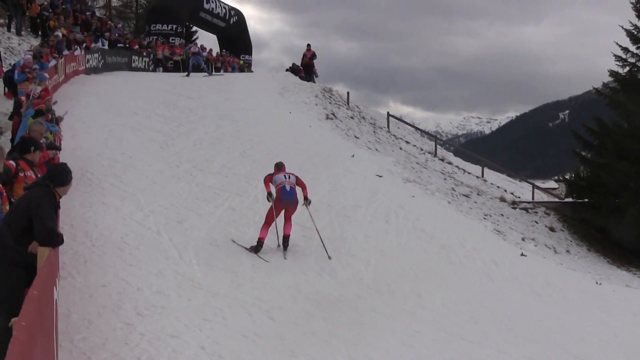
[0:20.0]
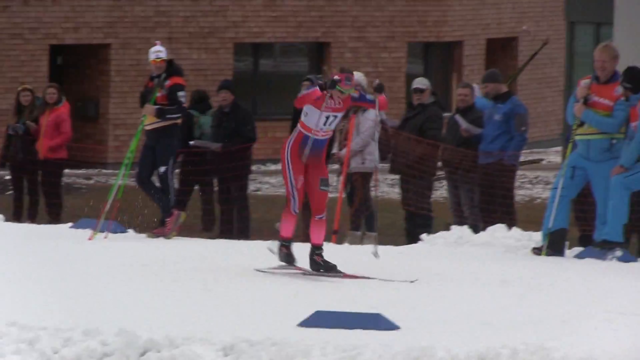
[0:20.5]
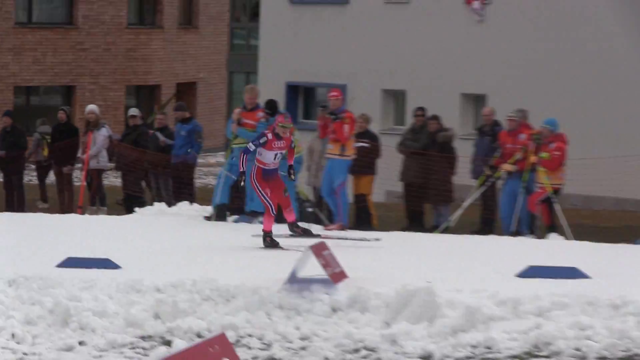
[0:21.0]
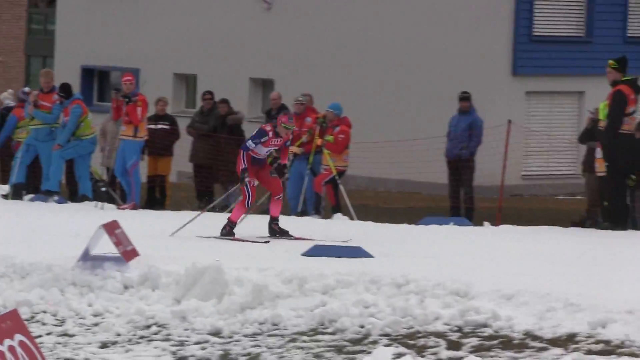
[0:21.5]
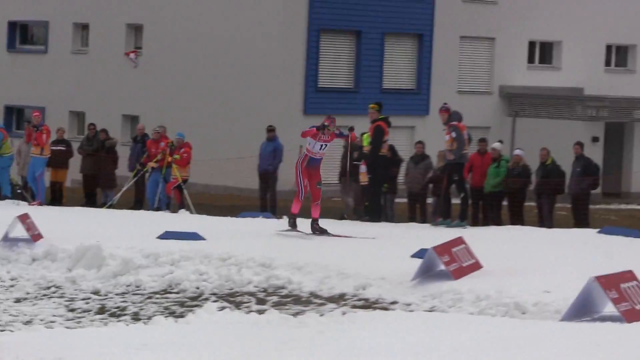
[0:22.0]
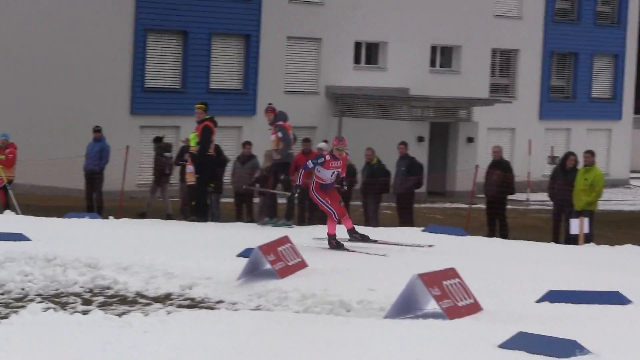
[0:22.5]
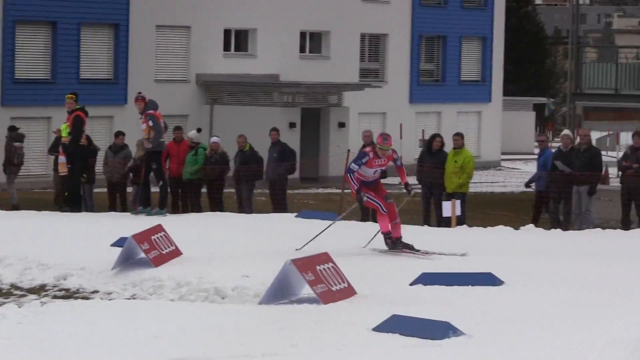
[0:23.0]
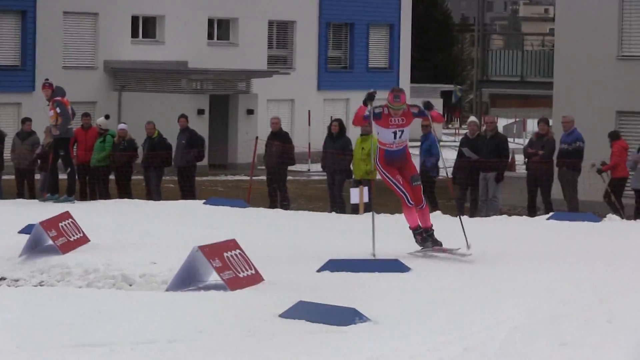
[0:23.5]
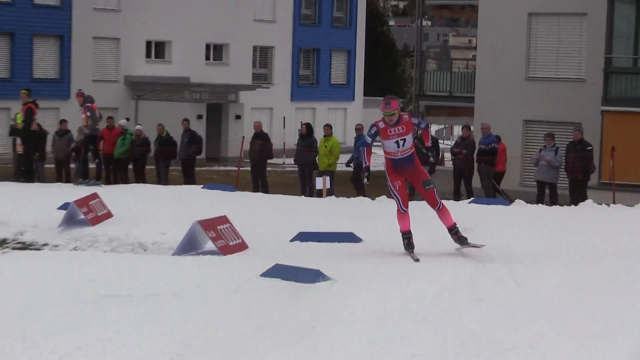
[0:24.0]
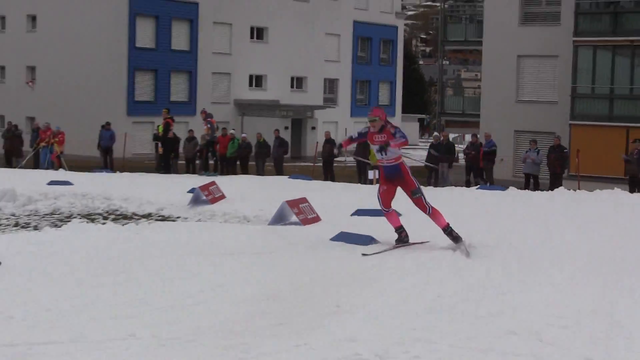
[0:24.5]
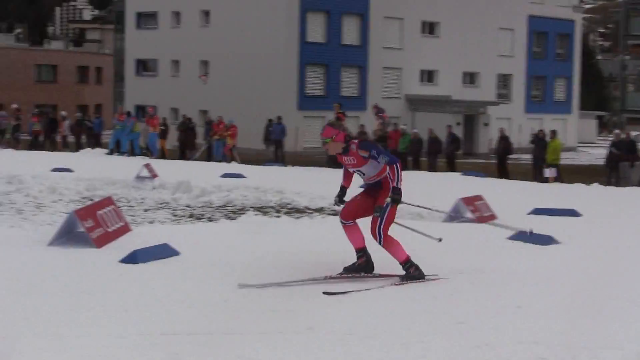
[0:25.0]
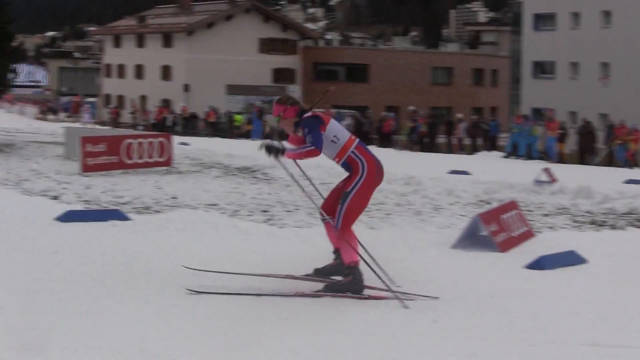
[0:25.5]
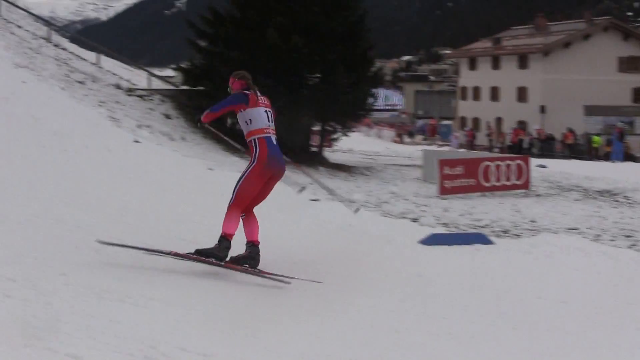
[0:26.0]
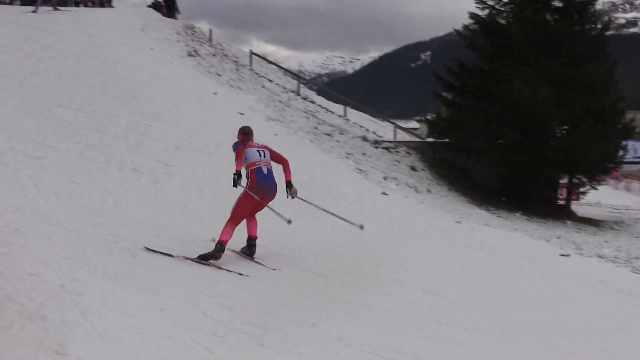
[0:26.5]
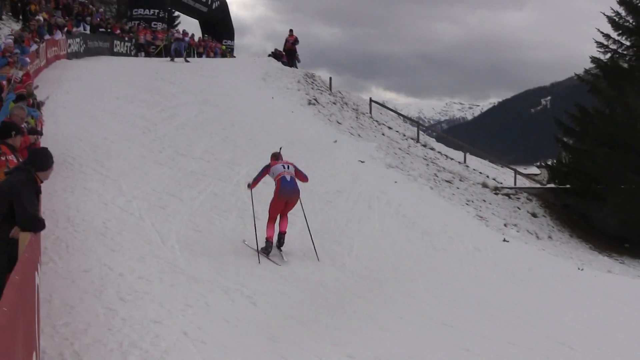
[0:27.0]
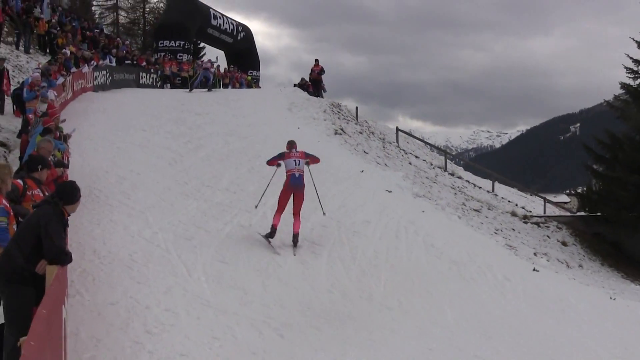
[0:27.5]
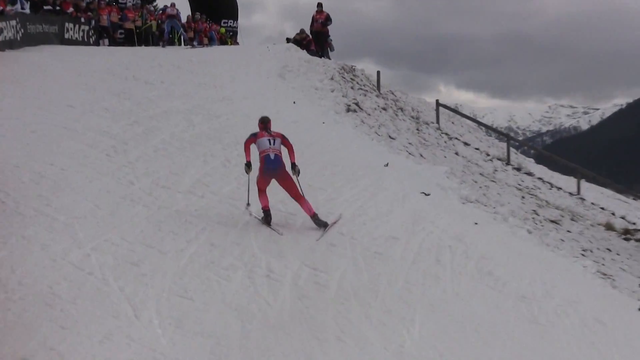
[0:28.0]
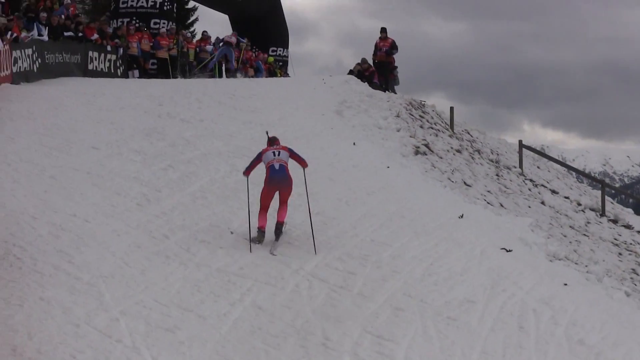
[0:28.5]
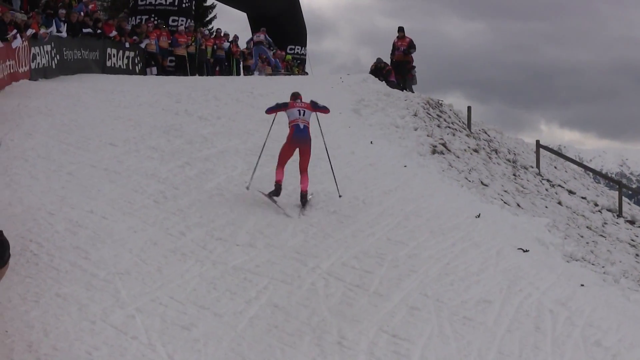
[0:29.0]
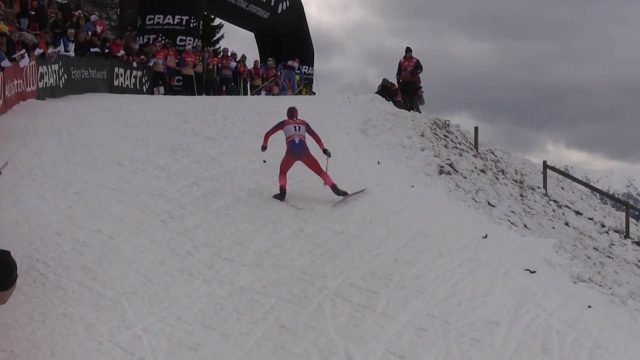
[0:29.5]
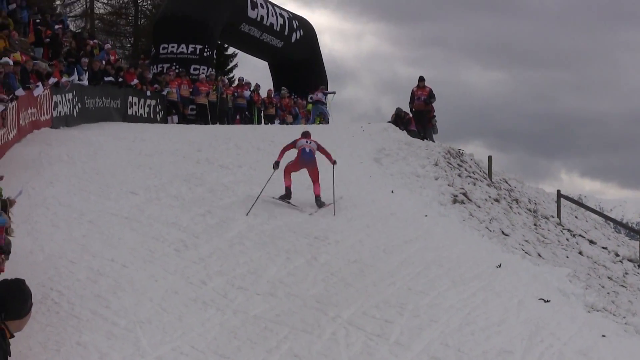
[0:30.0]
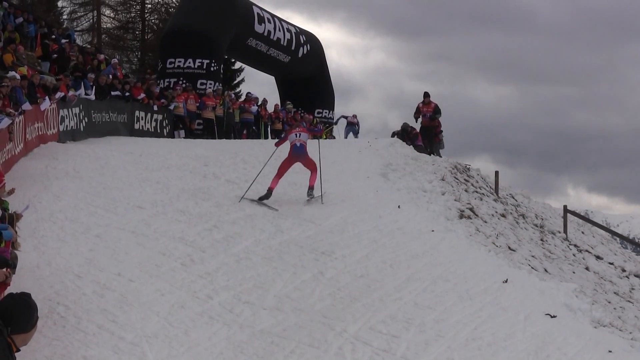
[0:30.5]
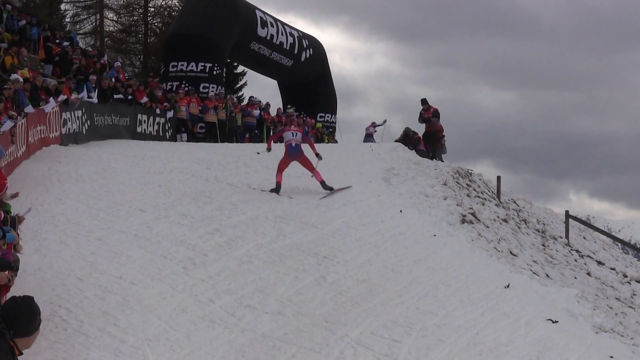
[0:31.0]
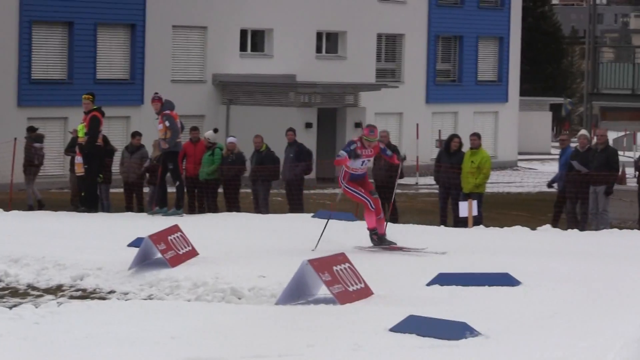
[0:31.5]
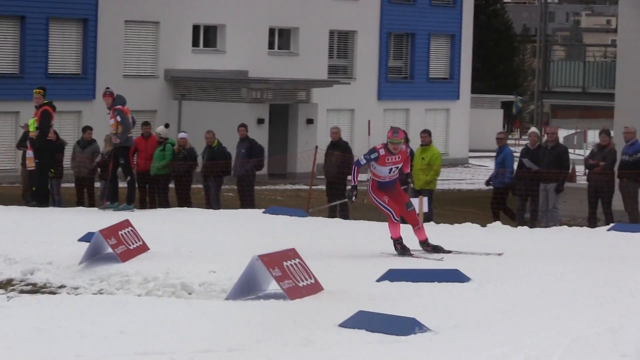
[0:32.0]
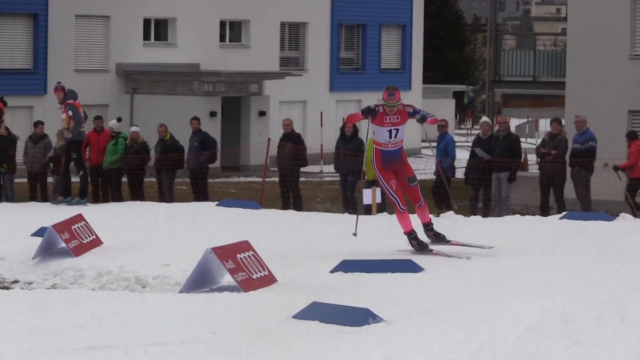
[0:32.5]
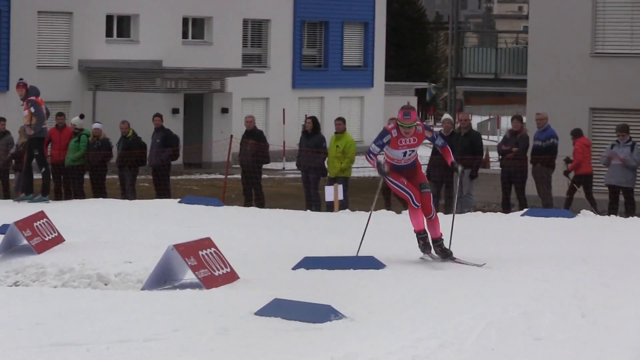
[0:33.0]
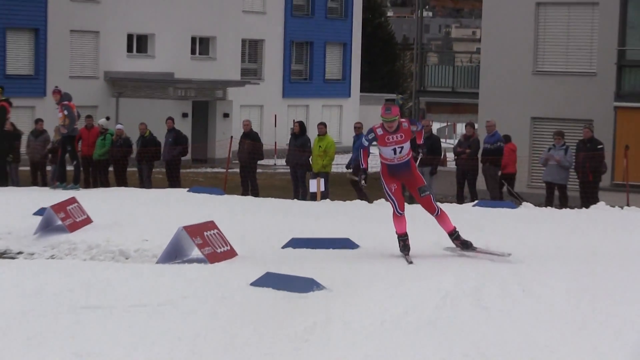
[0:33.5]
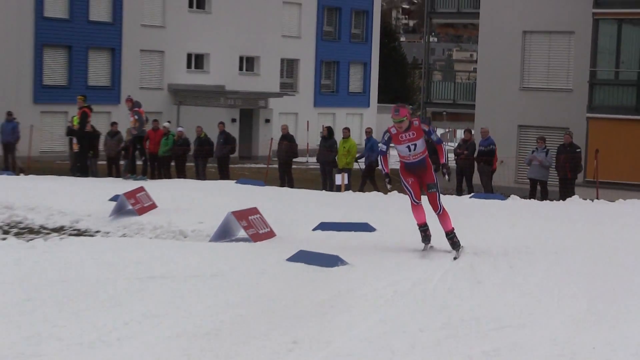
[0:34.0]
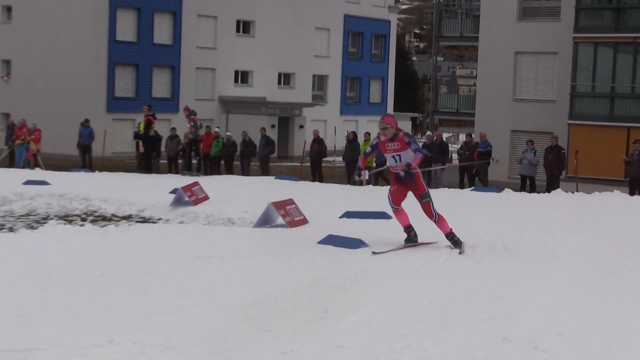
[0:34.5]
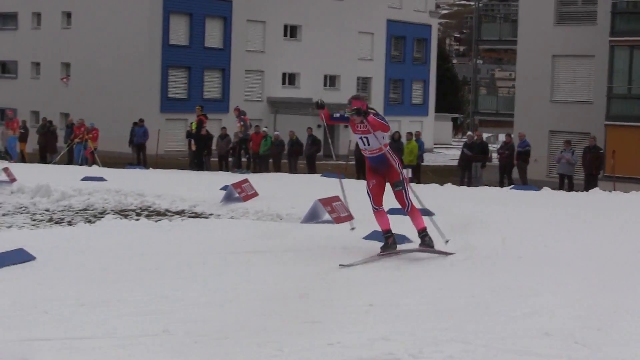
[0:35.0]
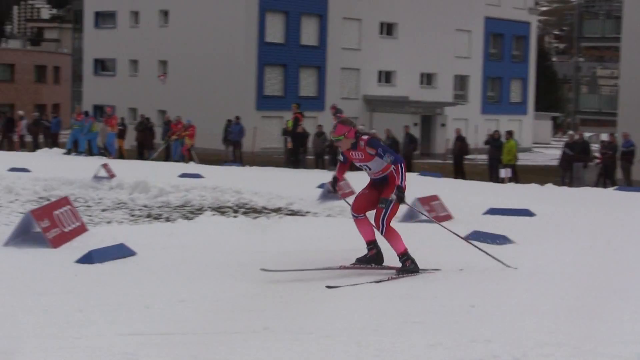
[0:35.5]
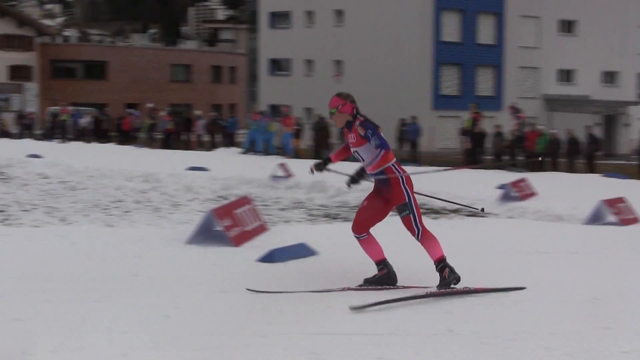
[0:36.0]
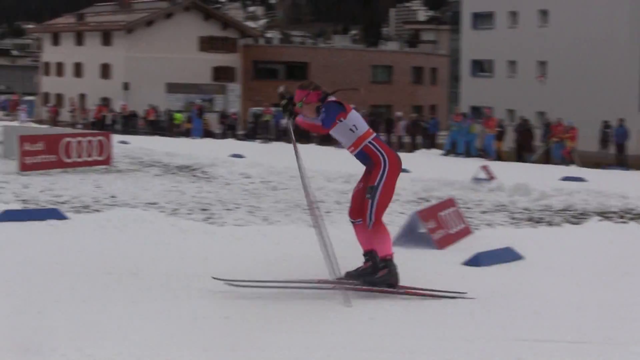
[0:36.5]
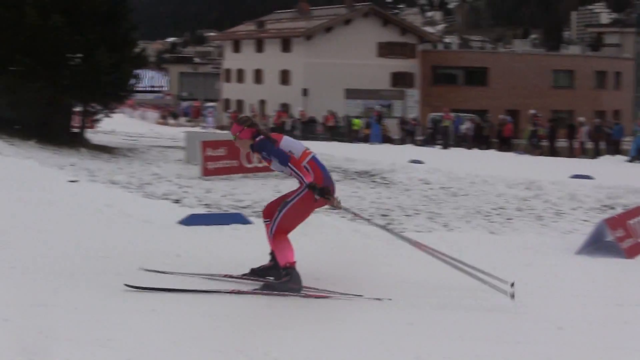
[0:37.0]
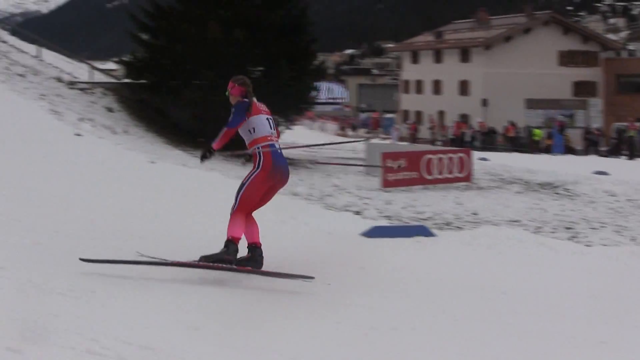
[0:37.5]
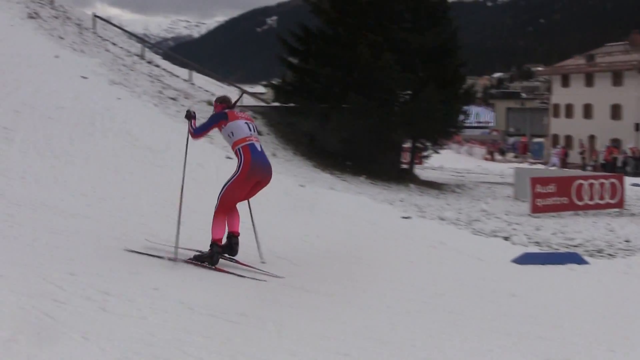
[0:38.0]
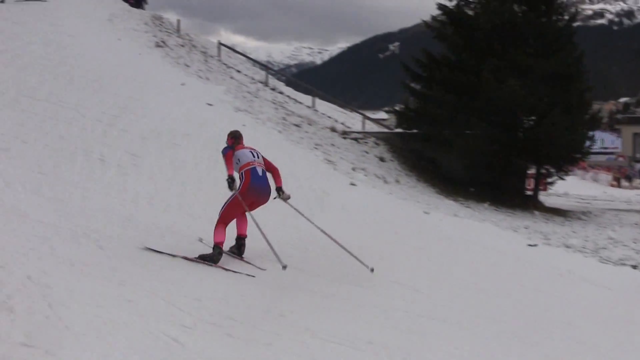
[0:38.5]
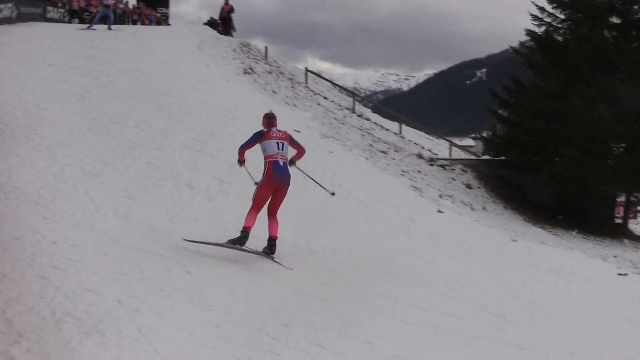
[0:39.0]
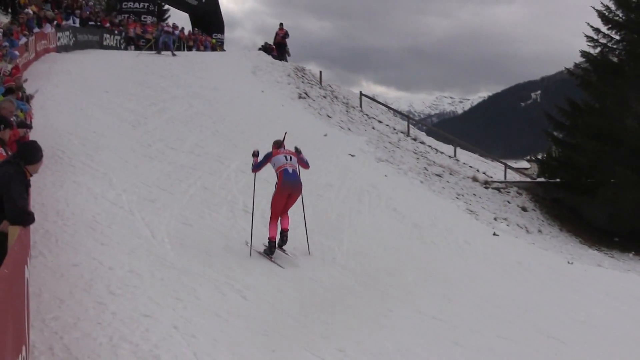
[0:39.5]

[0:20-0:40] The woman is still going up the slope, in a repetition of the same footage in slight slow motion. She holds poles in her right and left hands and uses her upper body strength to pull herself up the slope. Nothing else changes; the setting is the same area, possibly in Europe judging by the architecture.